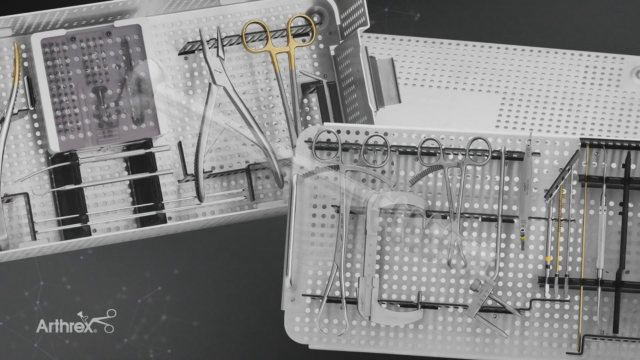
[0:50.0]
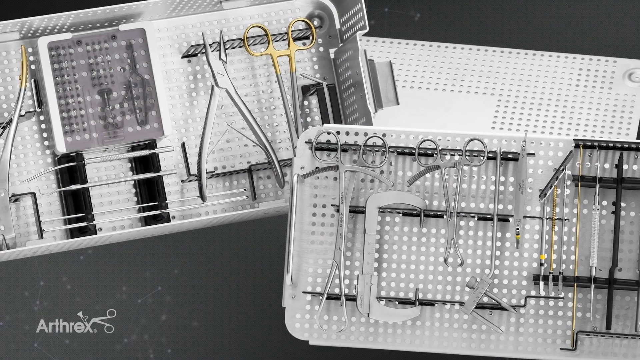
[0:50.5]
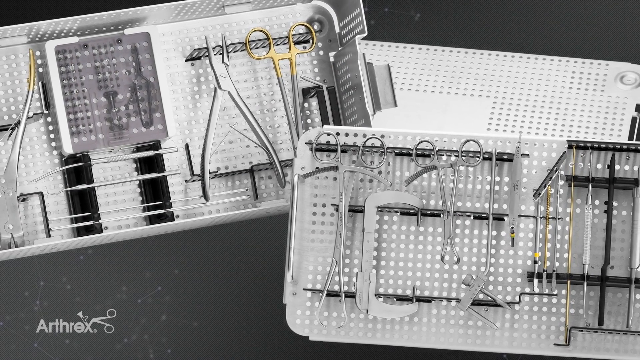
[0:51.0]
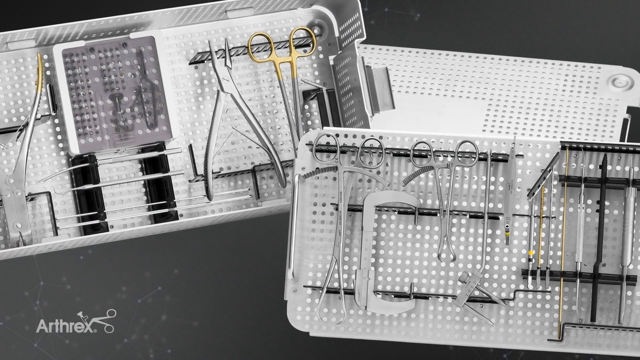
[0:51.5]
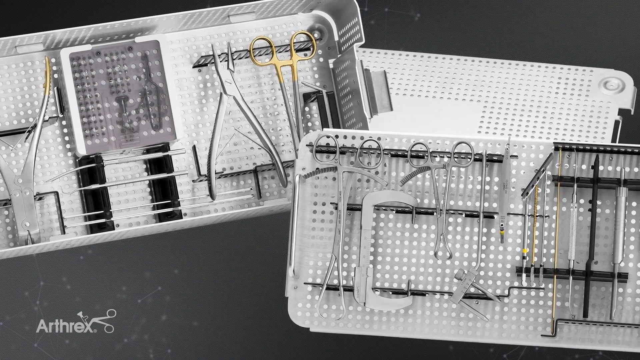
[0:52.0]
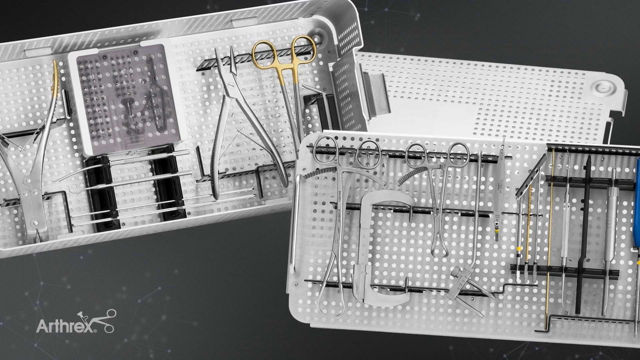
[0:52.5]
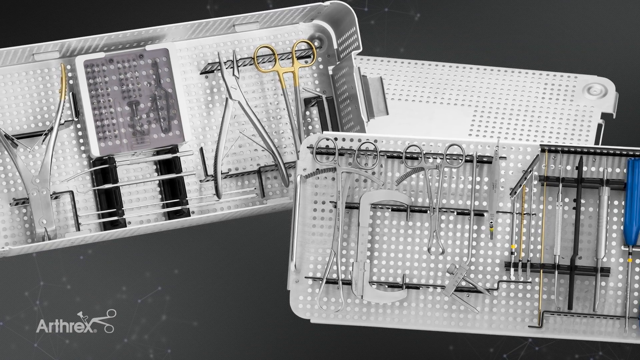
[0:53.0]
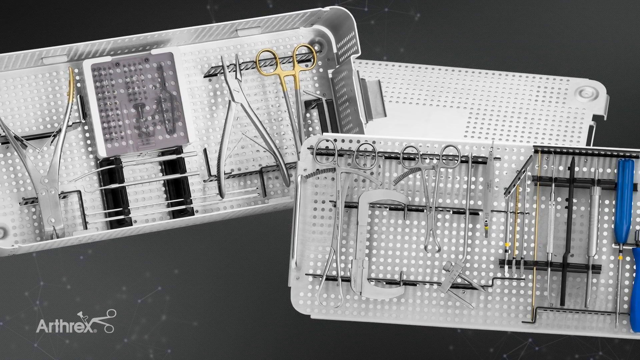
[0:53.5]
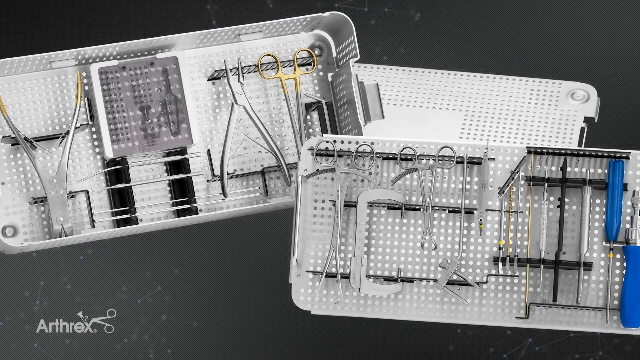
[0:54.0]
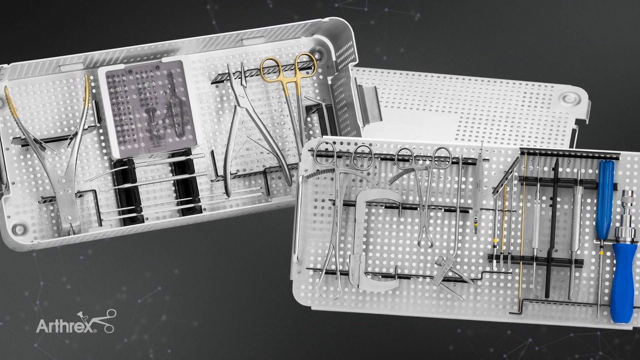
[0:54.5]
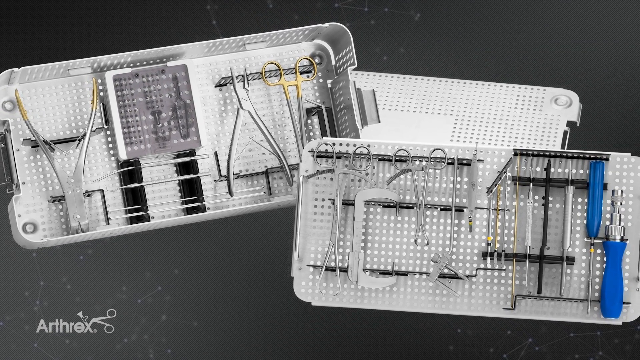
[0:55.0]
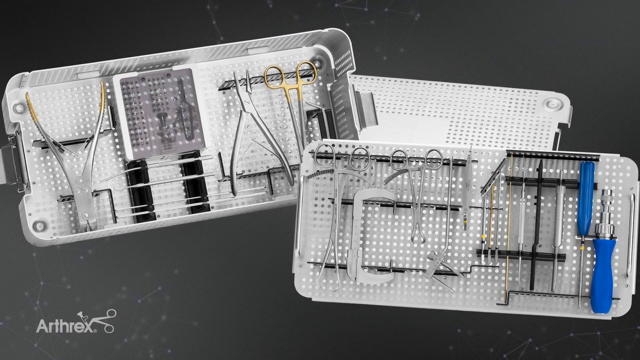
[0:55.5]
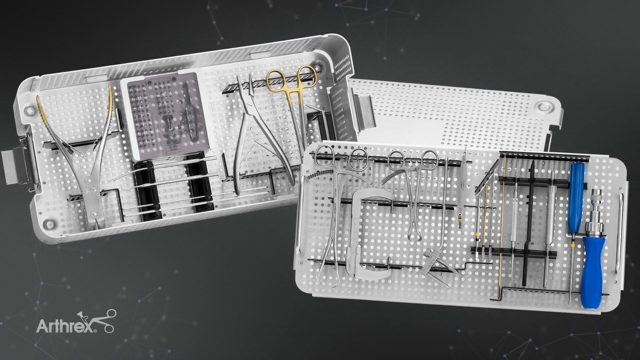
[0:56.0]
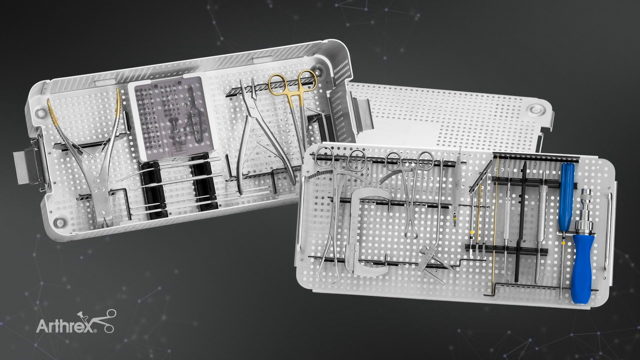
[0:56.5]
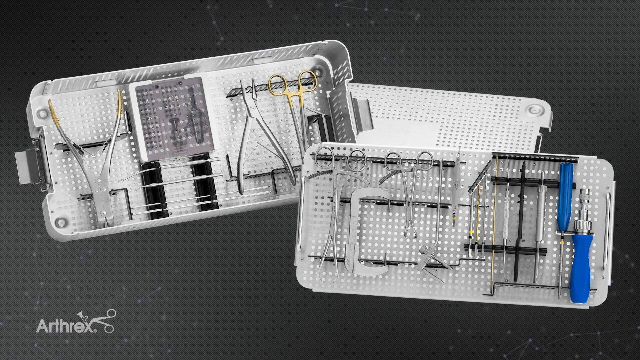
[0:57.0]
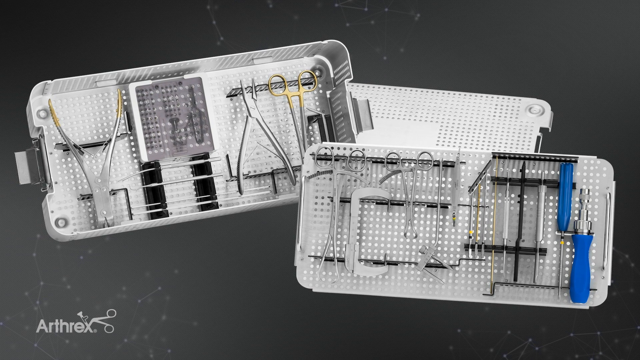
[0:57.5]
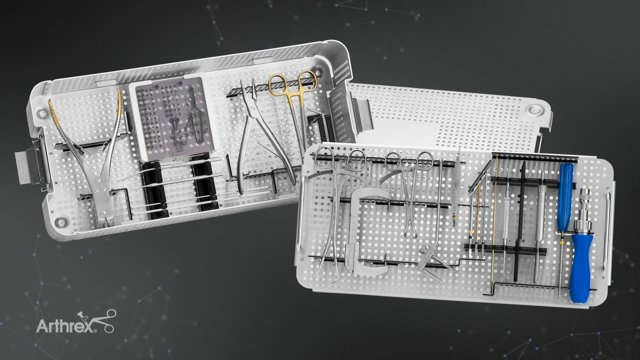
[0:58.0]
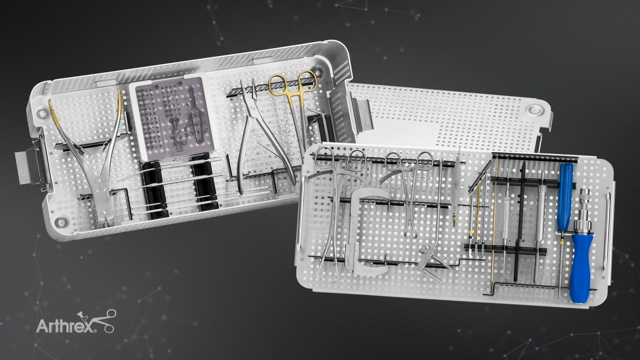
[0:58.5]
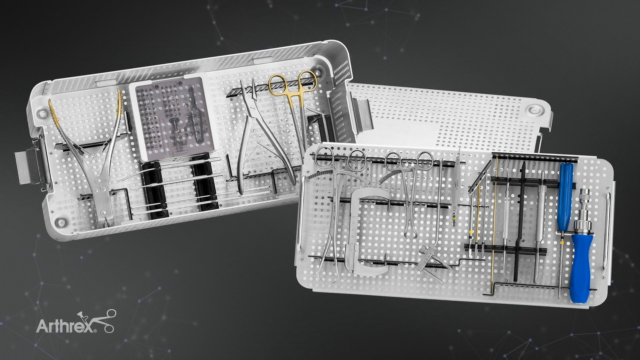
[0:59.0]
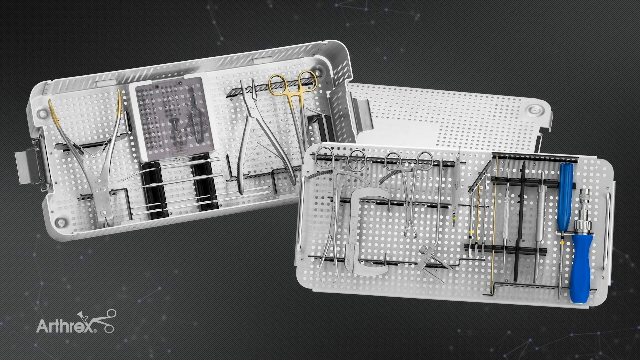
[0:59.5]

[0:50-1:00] What looks like a couple of boxes full of medical supplies appears in what seems to be a still image, with the camera zooming out to show more of each box. The boxes have many holes in them. The left box holds something like a clipper and a scissors-like object with a yellow handle. The right box holds more scissors-like objects and some that look like screwdrivers with blue handles. A lid is behind both boxes.